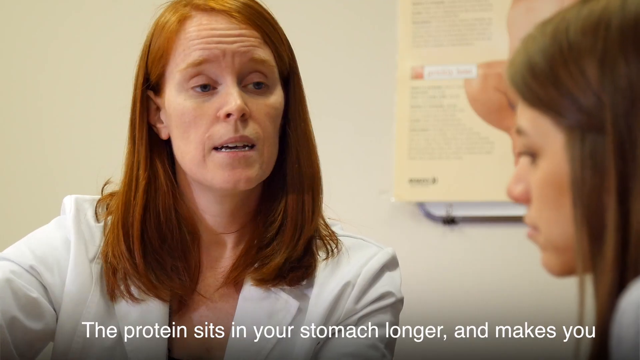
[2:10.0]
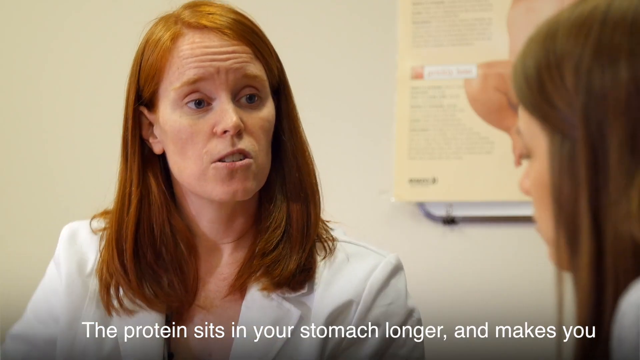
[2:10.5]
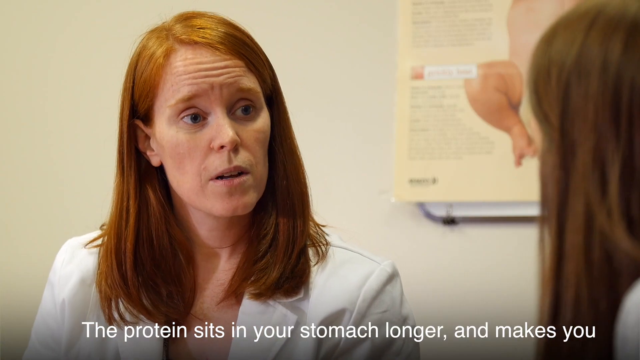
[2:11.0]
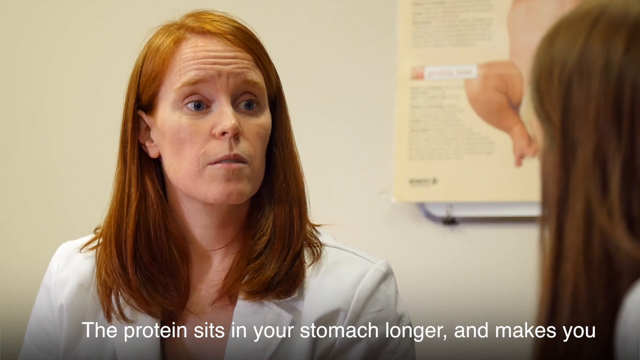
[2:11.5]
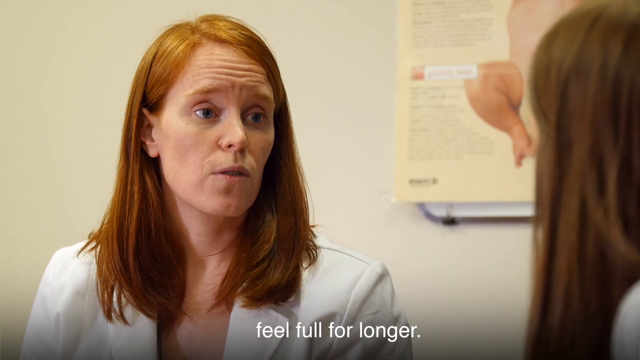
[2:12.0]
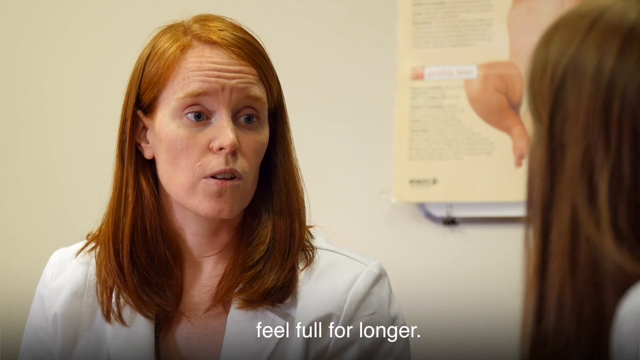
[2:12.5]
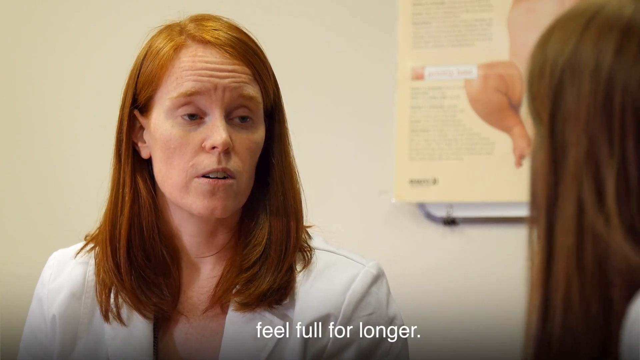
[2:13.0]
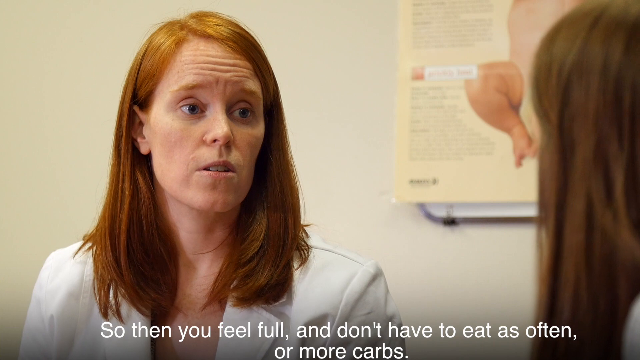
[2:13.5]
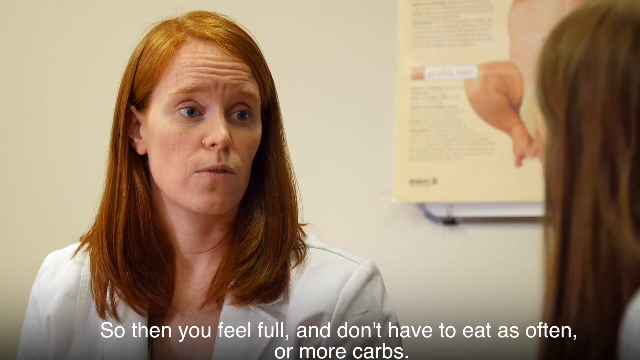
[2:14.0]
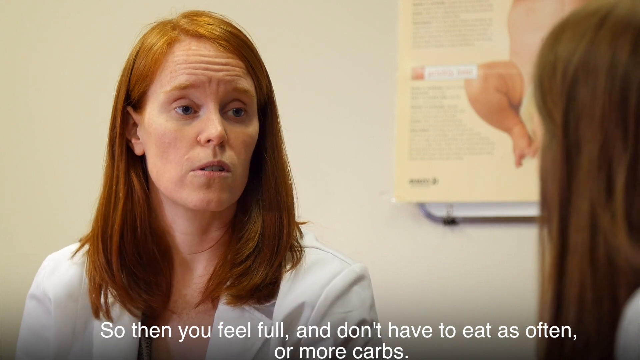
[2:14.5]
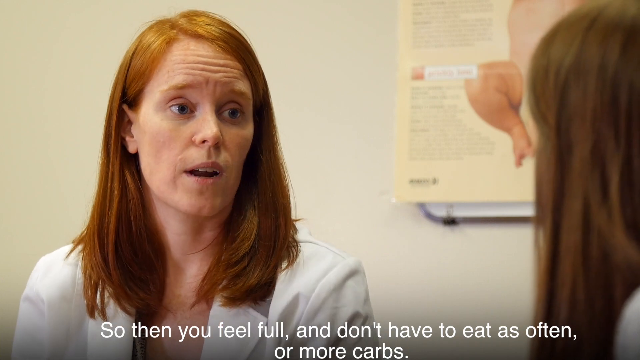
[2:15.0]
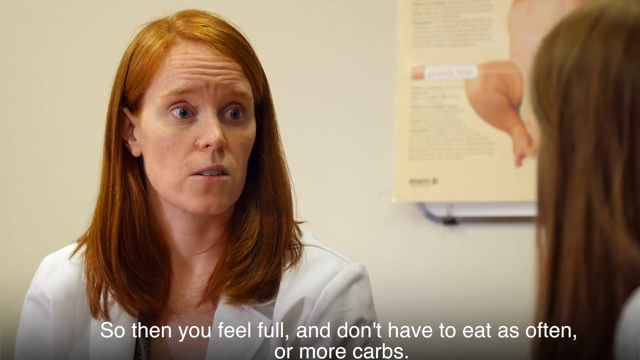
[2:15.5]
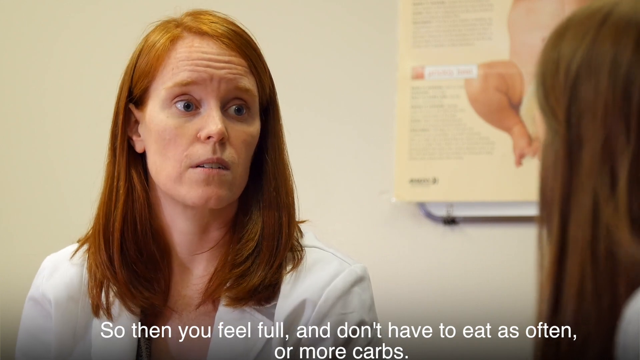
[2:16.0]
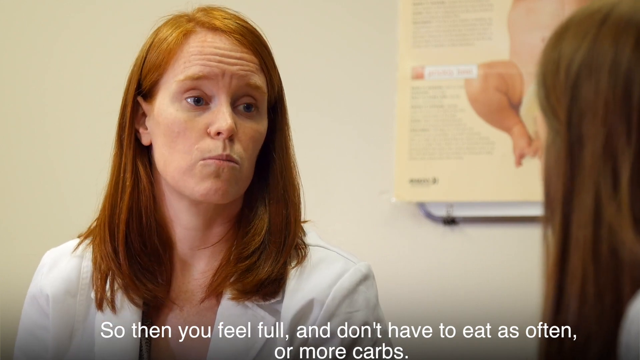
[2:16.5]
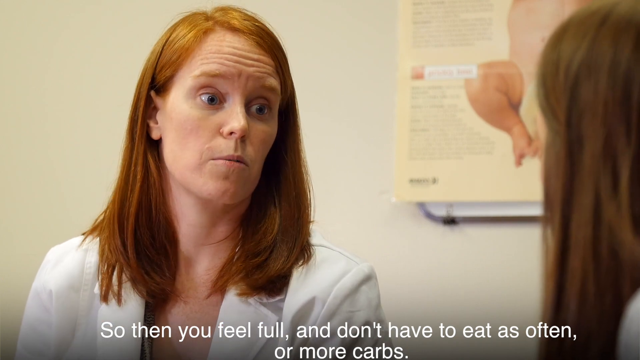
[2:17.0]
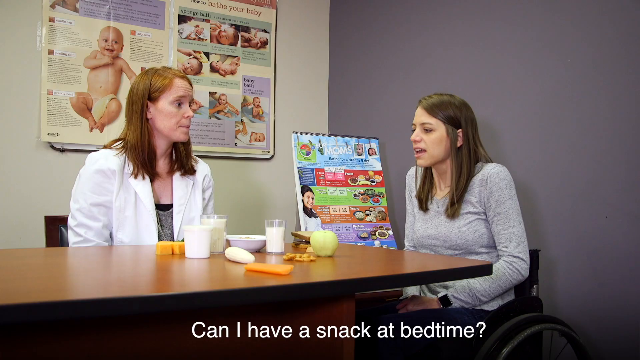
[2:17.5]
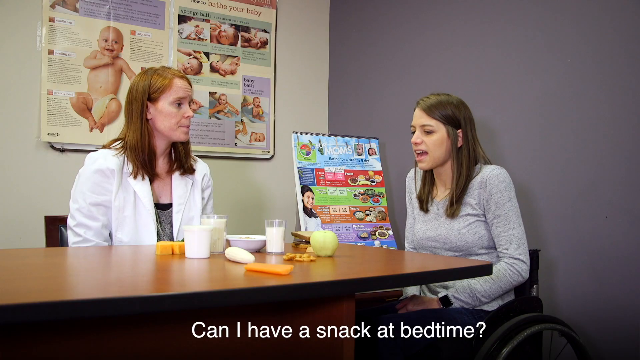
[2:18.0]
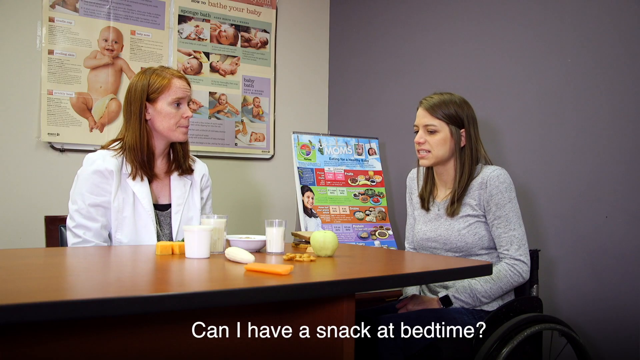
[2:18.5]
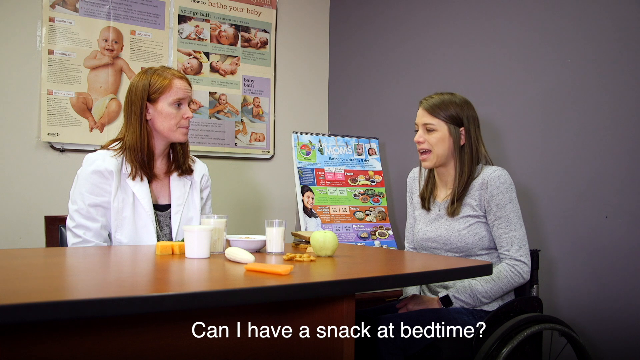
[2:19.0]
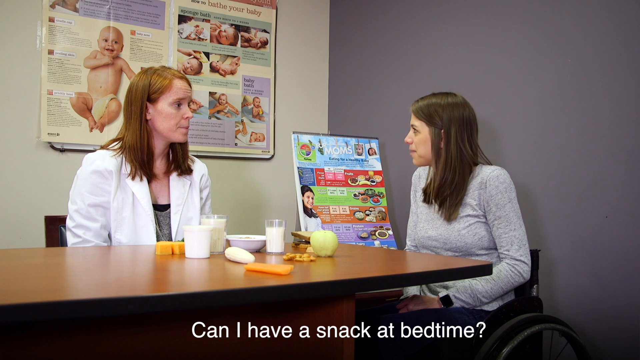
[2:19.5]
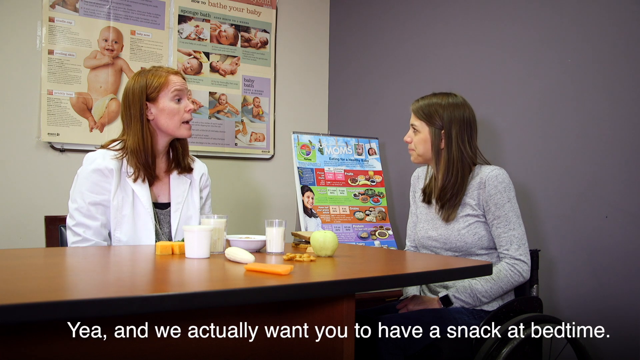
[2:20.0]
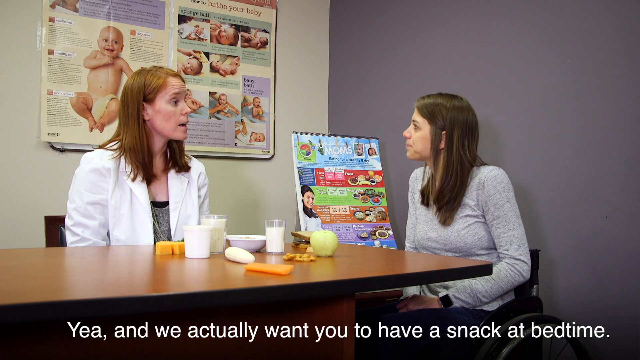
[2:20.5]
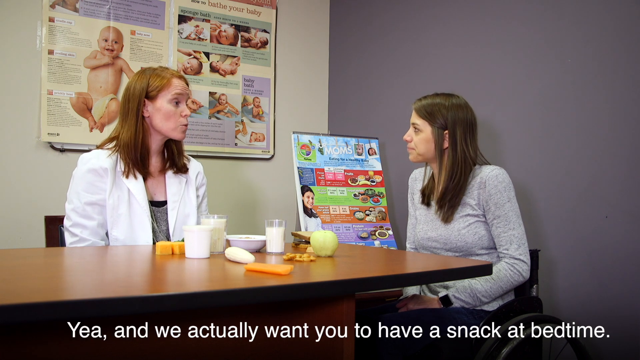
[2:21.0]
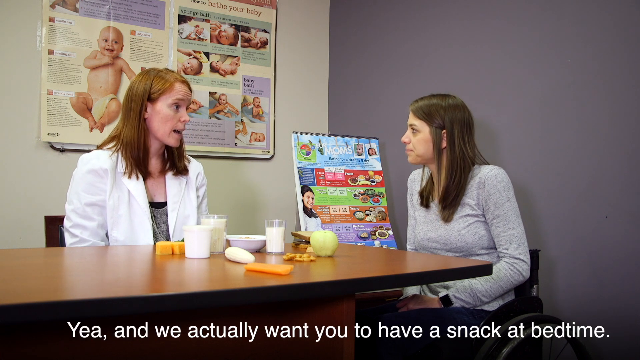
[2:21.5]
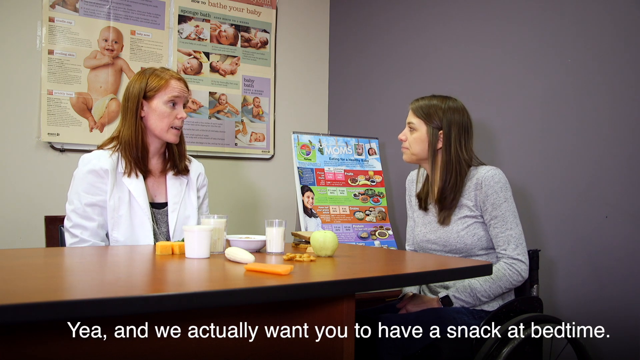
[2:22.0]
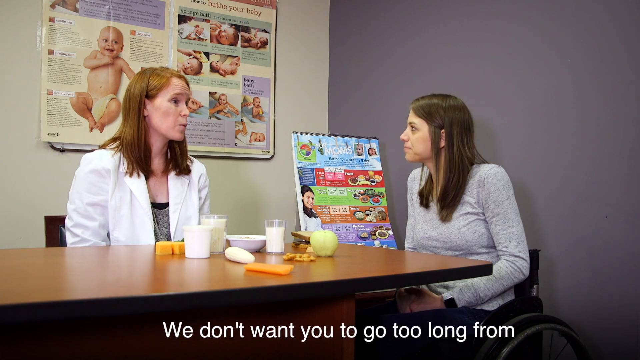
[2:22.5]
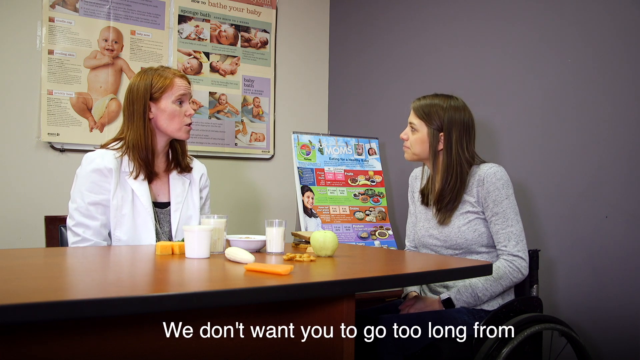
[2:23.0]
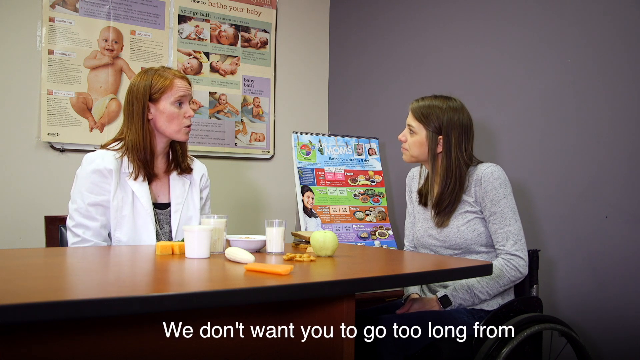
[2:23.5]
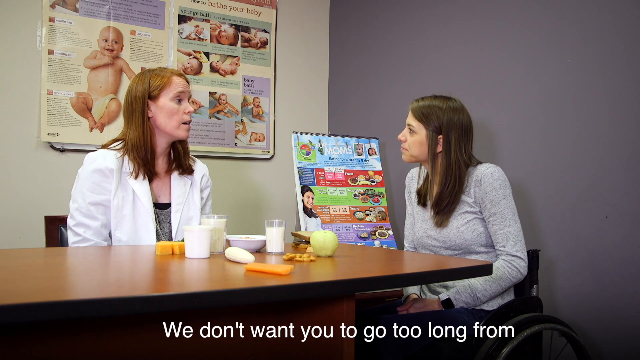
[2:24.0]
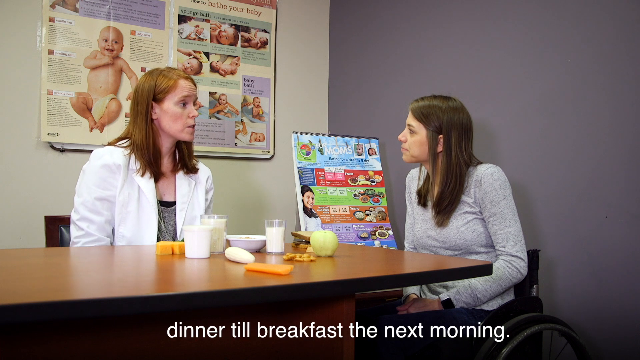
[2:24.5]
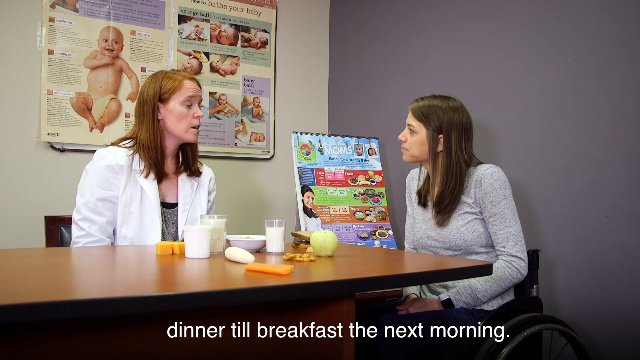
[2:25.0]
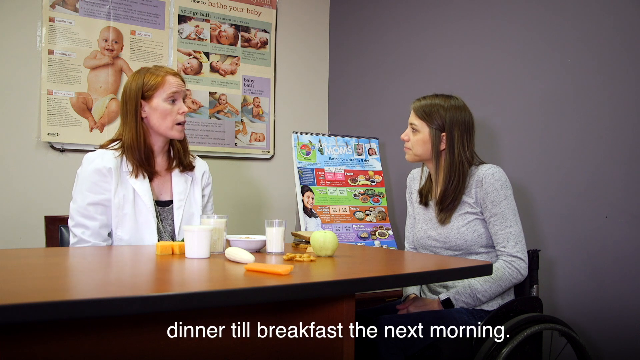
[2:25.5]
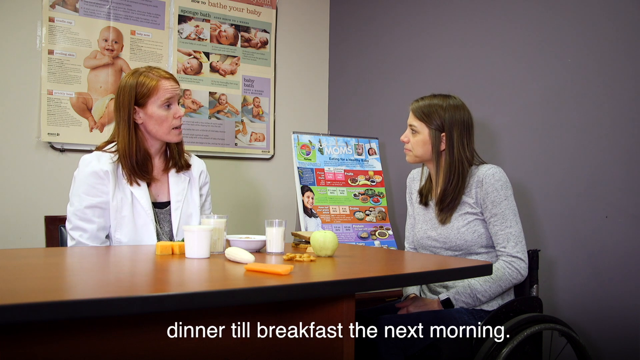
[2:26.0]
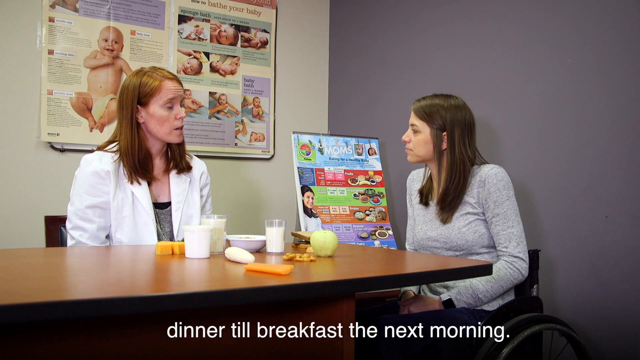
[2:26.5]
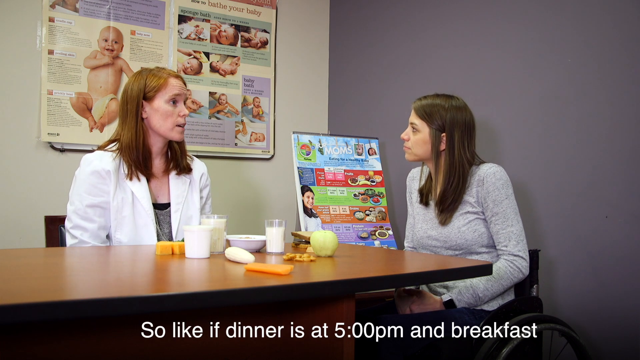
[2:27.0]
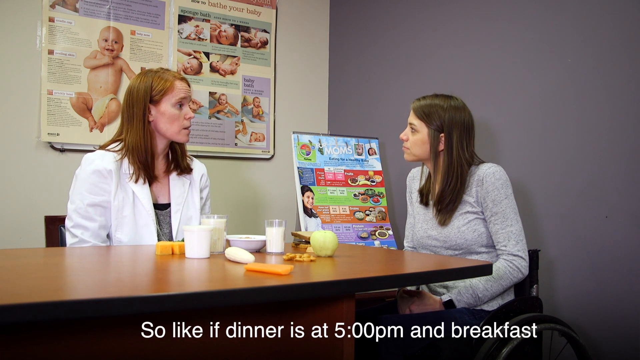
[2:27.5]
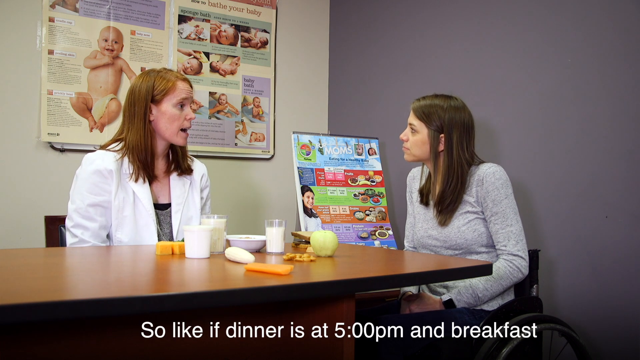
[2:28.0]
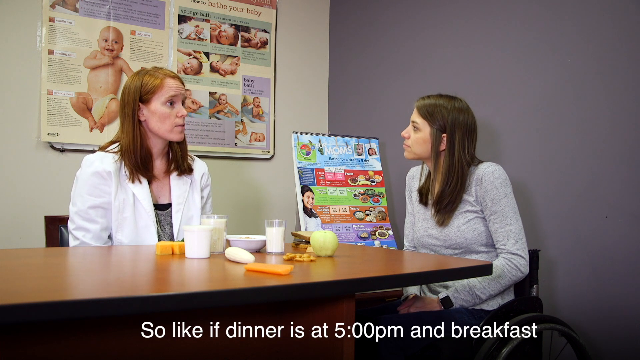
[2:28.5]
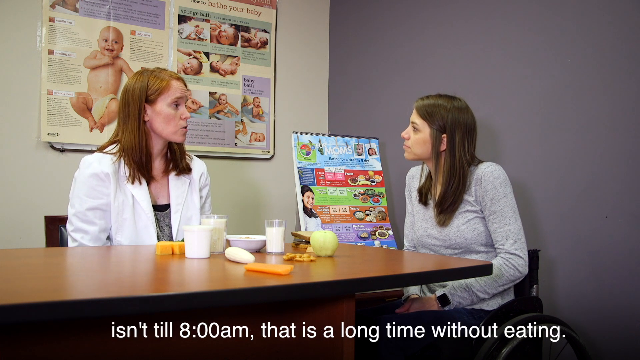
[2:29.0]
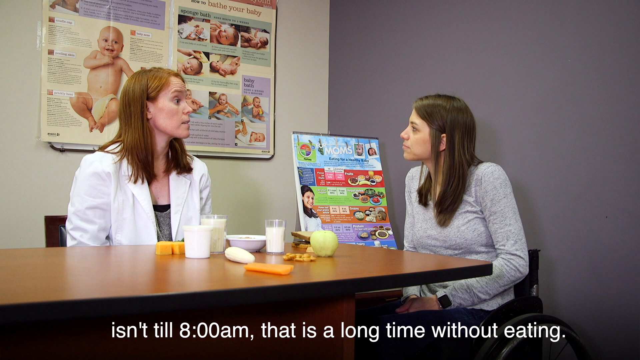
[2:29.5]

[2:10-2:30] The conversation continues between the doctor or nutritionist and the pregnant woman. They sit across from each other at a table in a room that looks like an office, a medical office, possibly a meeting room or conference room off to the side. On the table are mock food examples, or models of food, showing many different kinds of food. The patient asks questions and the doctor or nutritionist gives advice: protein stays in the stomach longer and makes you feel full longer. The patient asks whether she can have a snack at bedtime, and the doctor says yes, so she does not go too long between dinner and breakfast.